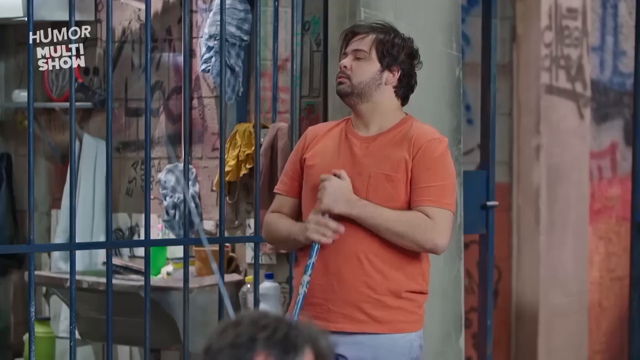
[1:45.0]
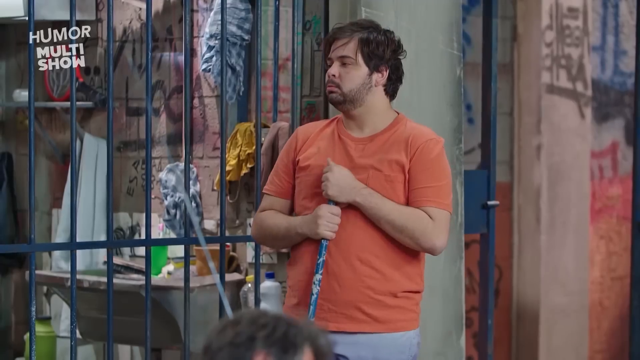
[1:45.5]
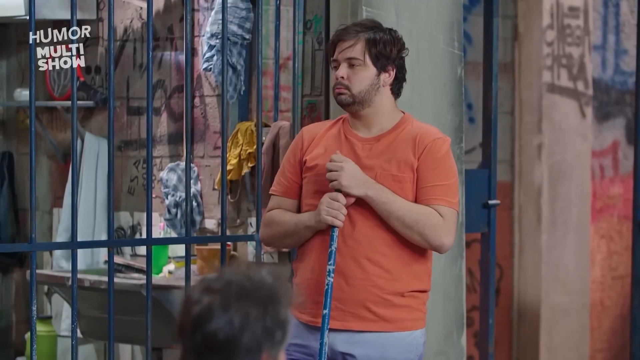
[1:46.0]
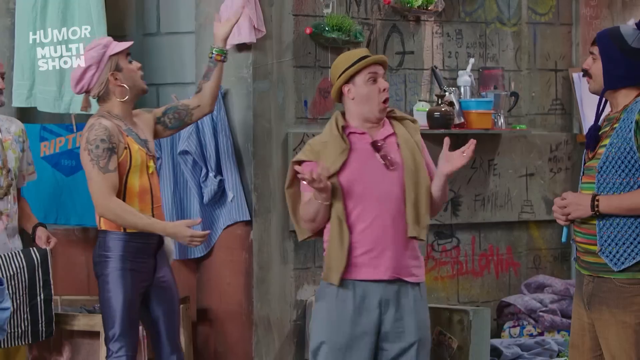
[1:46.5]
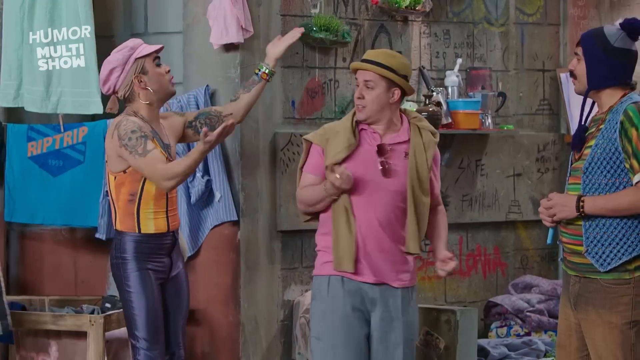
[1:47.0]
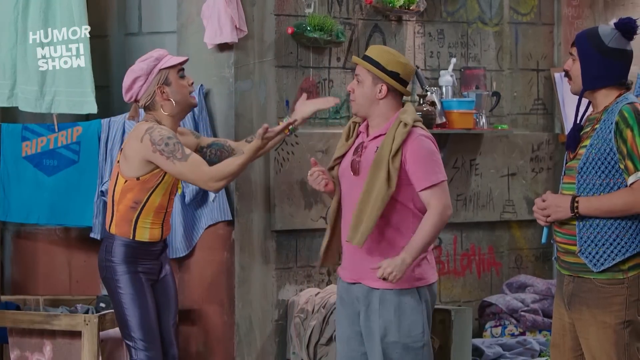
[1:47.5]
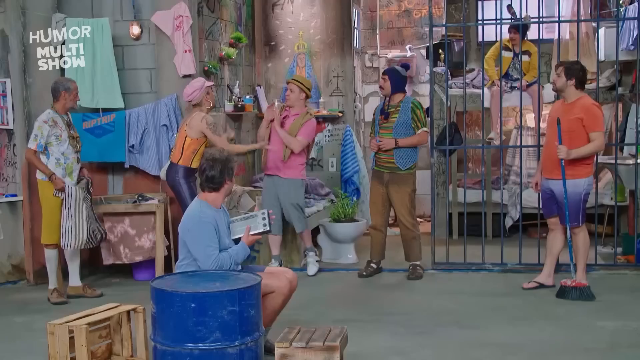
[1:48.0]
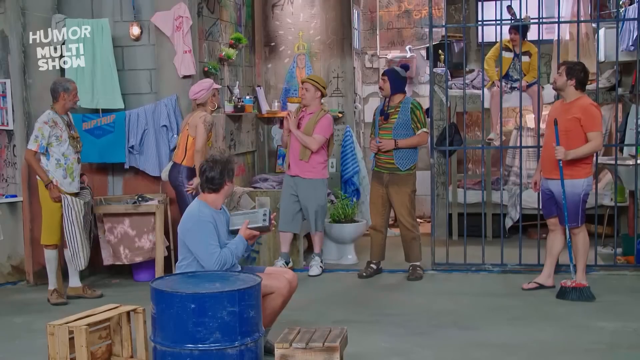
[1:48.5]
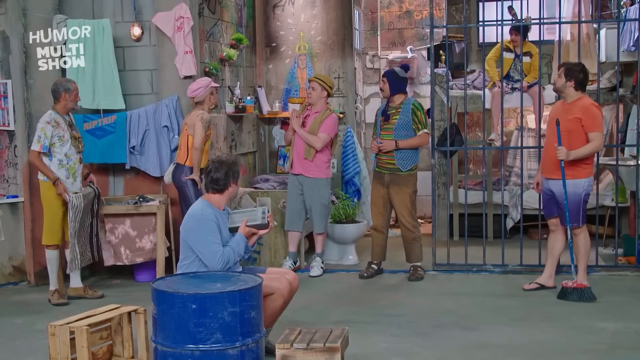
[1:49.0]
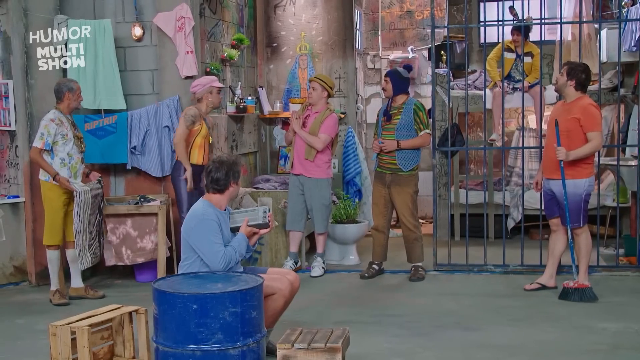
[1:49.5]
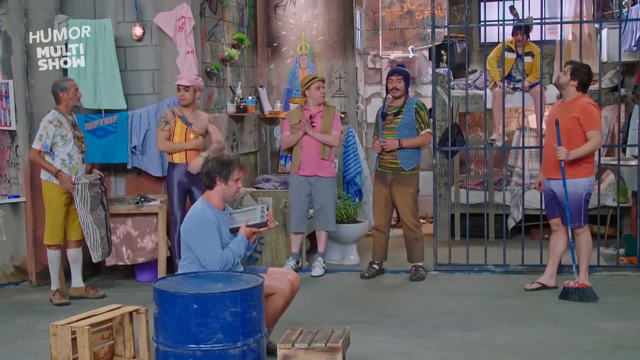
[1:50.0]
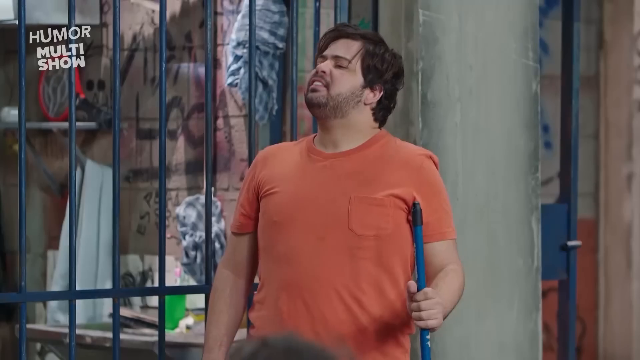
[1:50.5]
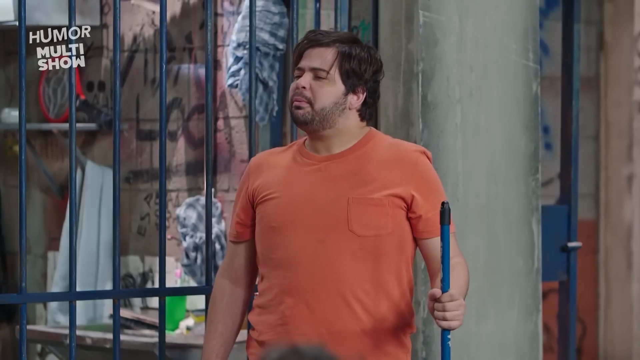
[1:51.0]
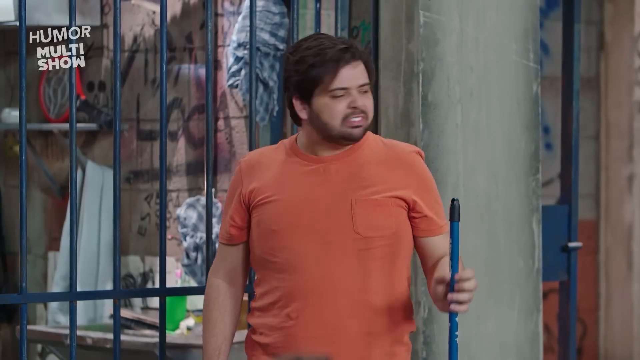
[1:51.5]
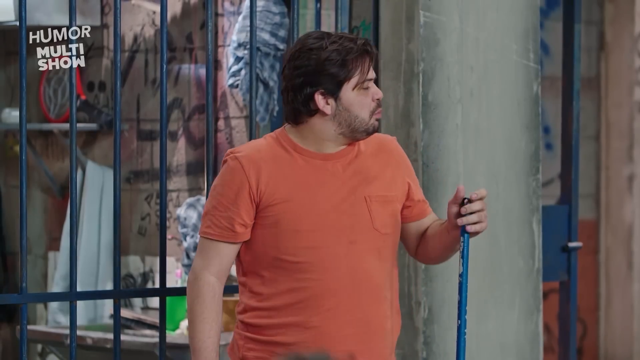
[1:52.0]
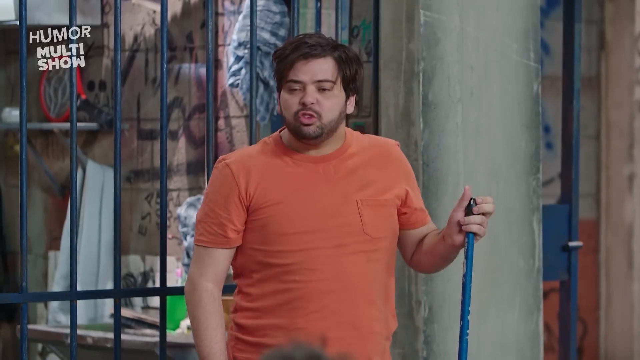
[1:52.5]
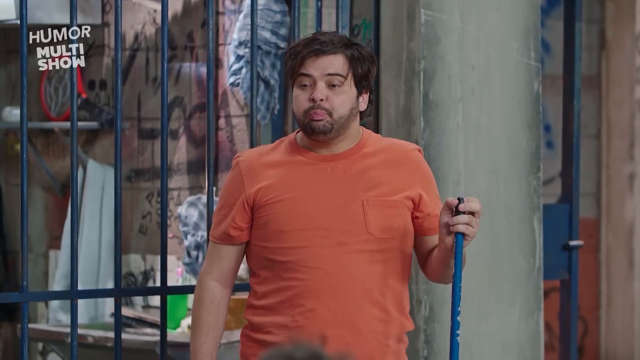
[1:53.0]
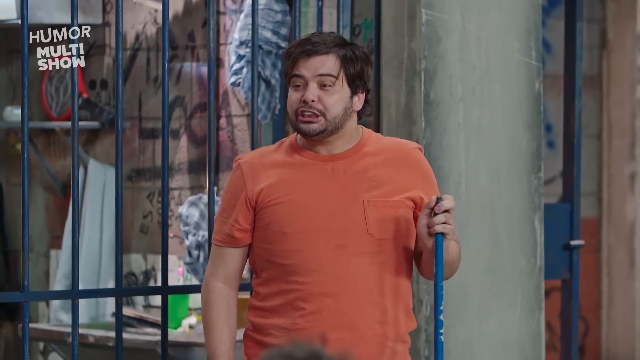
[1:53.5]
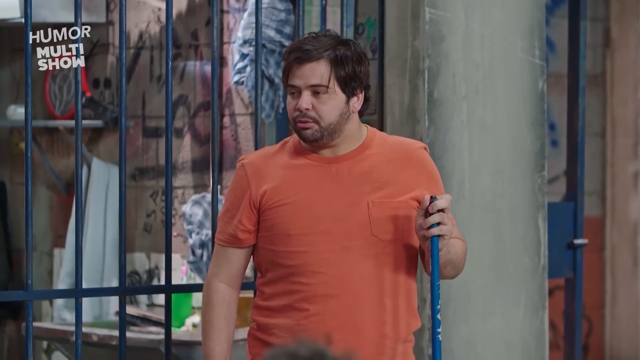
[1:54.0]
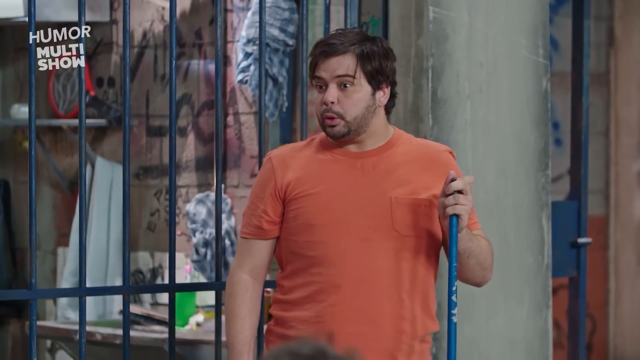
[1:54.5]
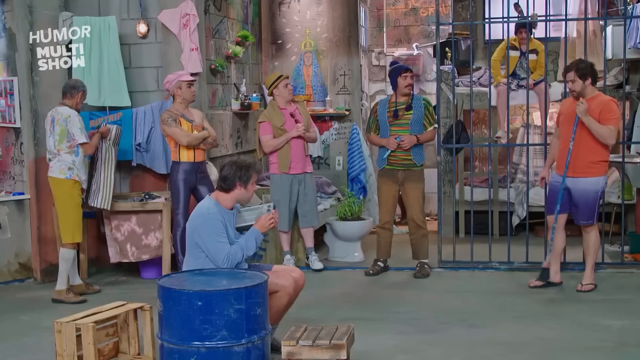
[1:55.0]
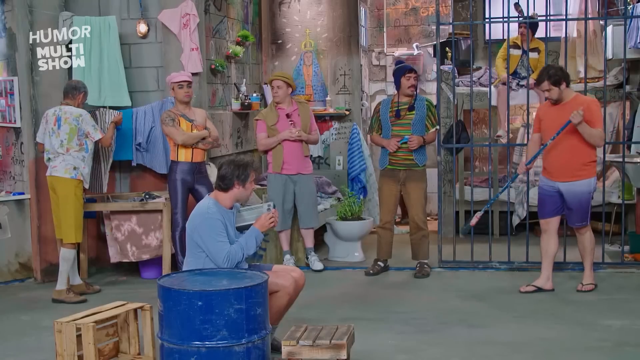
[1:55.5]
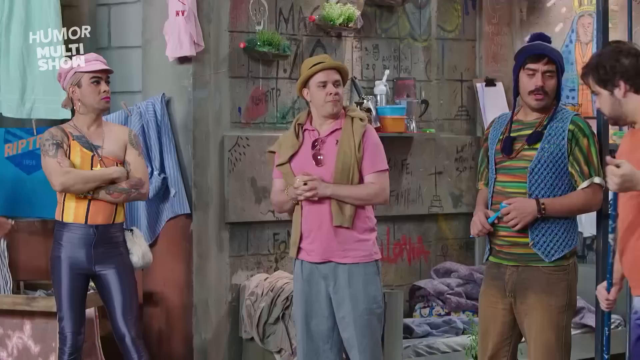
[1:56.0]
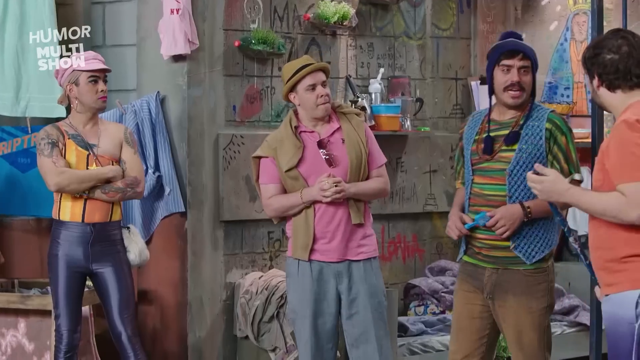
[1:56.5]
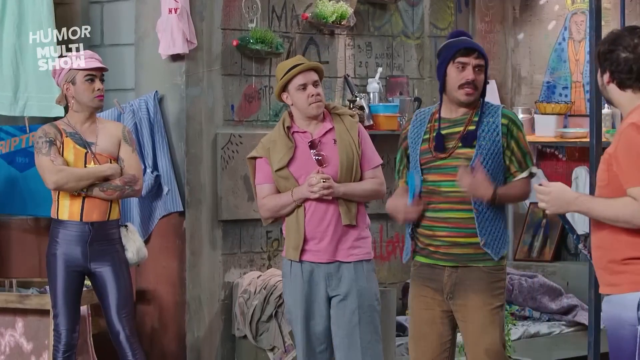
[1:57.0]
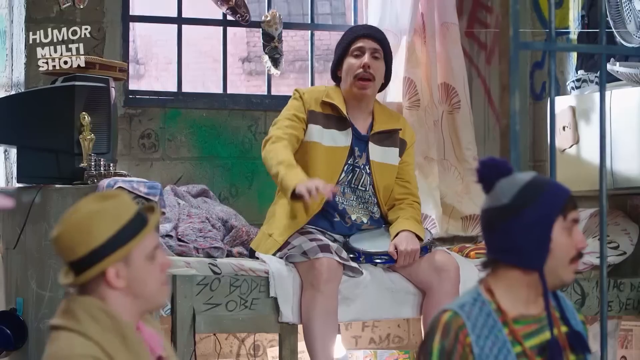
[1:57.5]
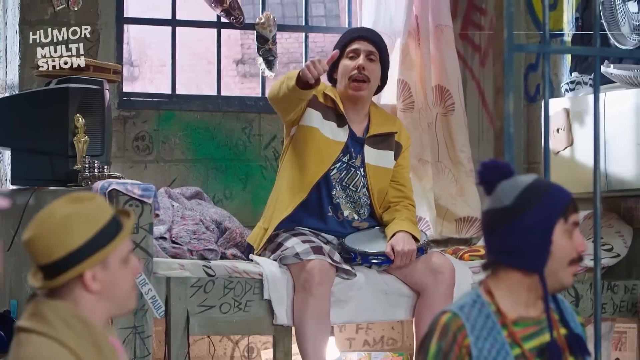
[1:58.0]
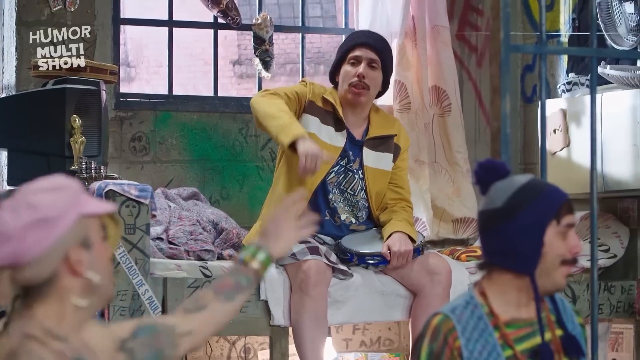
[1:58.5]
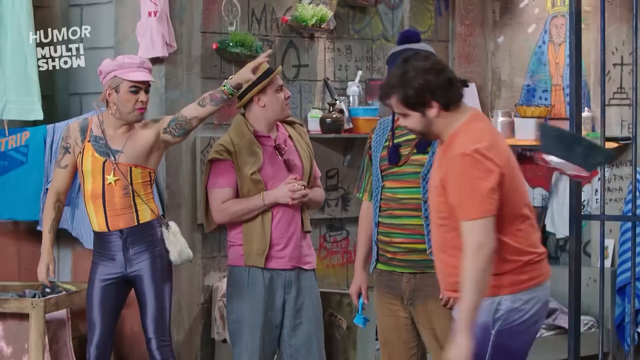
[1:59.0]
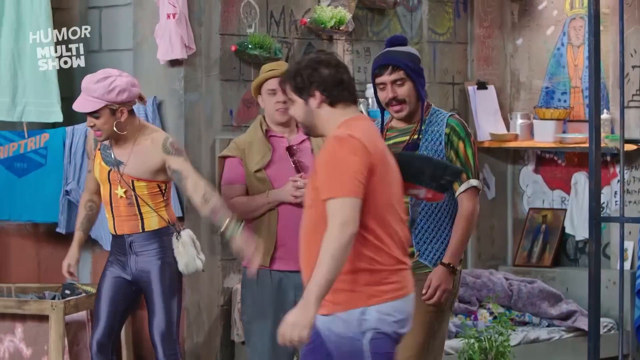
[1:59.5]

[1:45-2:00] A man in an orange shirt is in the jail cell with four or five other people. Next to him is a man in a funny hat with a pom-pom on top. A man in grey long shorts, a pink shirt and a straw hat talks to these two. To his right is a transvestite prostitute in a lycra pants outfit with a striped yellow and orange shirt and a pink beret. She has her arms crossed as if upset and gestures for the man in the orange shirt to come and talk to her; he mouths back to her. The person in the bunk bed shouts things. She summons the man in the orange shirt over, then puts her hands in the face of the man in the pink shirt. They all seem to be having some kind of discussion. She walks over to the far corner where the old man in the Hawaiian shirt is and calls the man in the orange shirt to come over.